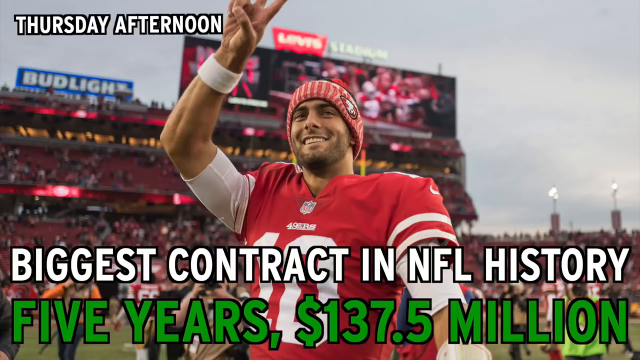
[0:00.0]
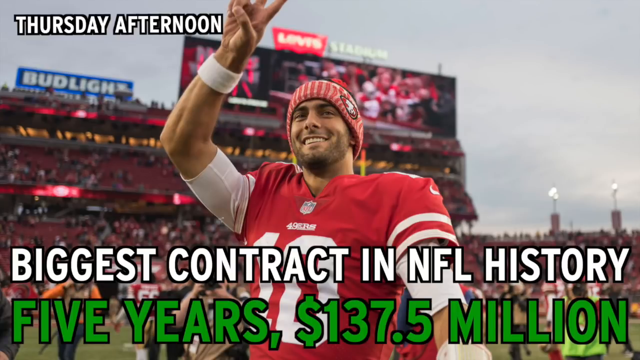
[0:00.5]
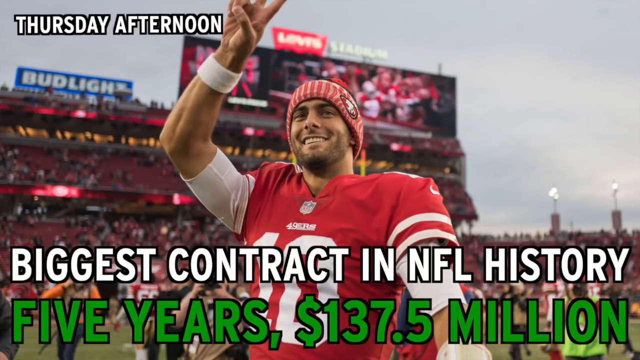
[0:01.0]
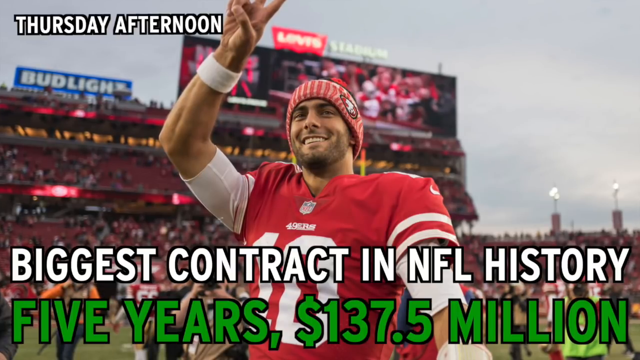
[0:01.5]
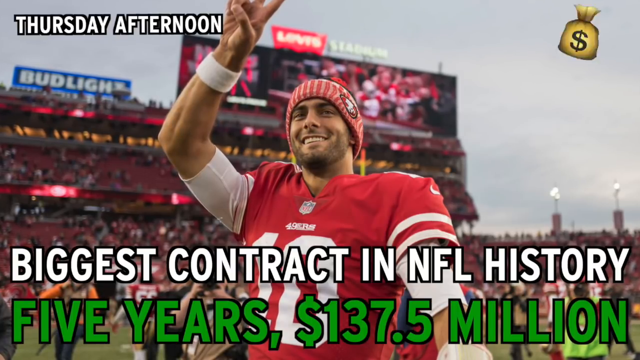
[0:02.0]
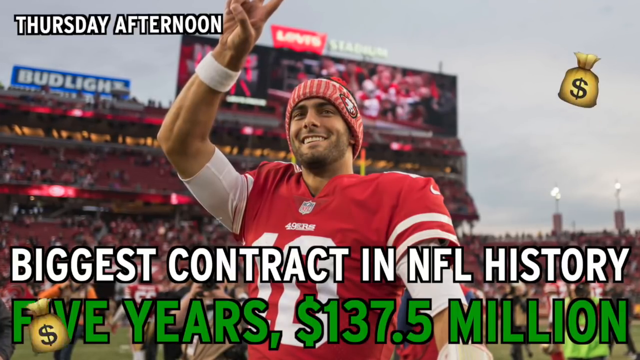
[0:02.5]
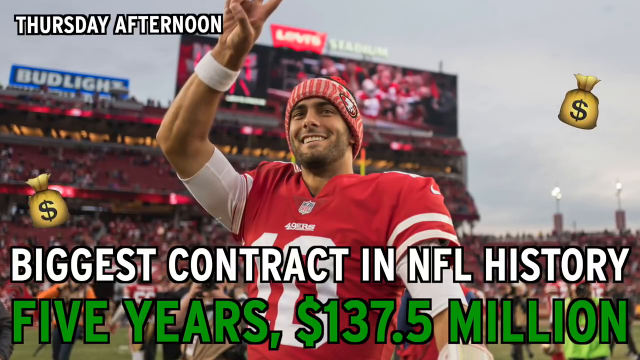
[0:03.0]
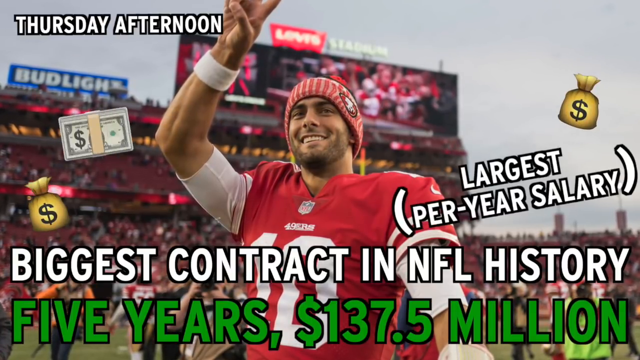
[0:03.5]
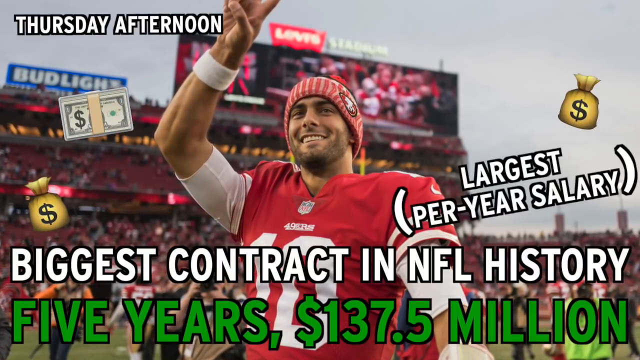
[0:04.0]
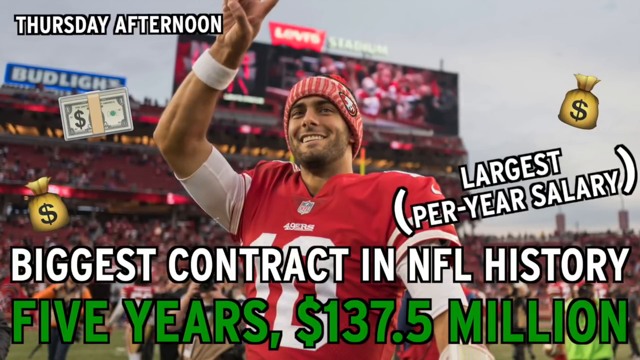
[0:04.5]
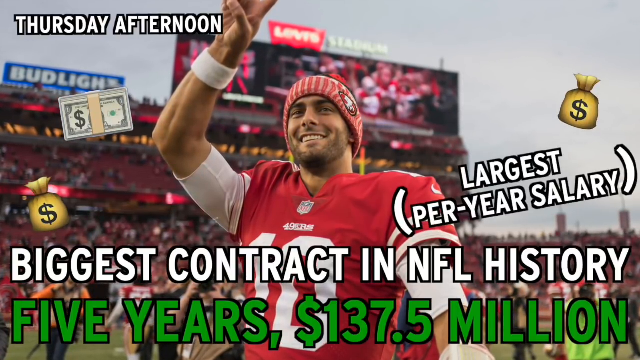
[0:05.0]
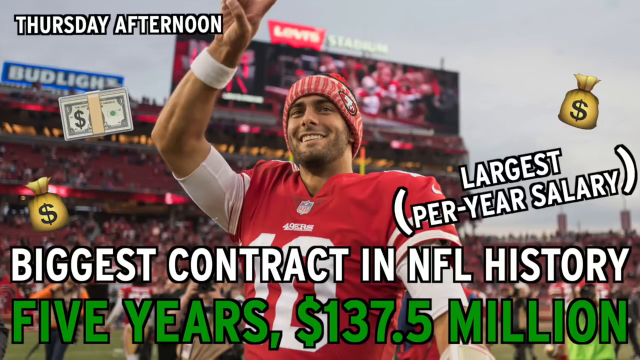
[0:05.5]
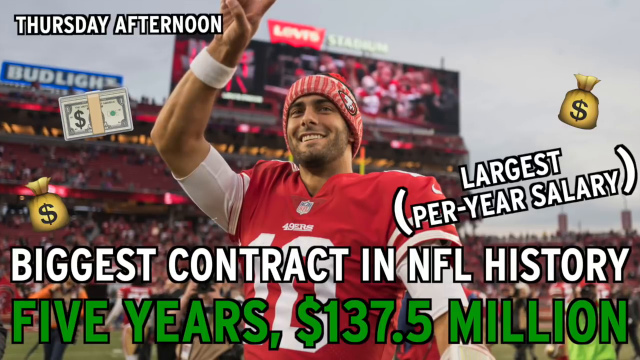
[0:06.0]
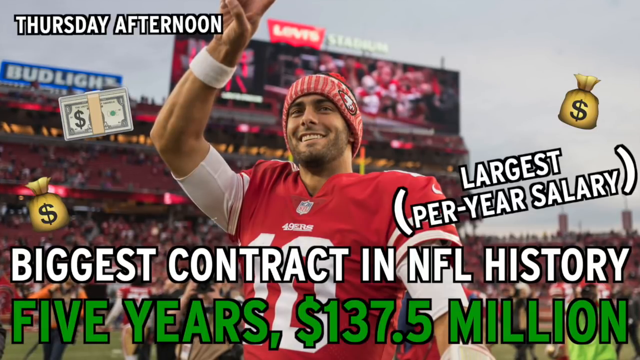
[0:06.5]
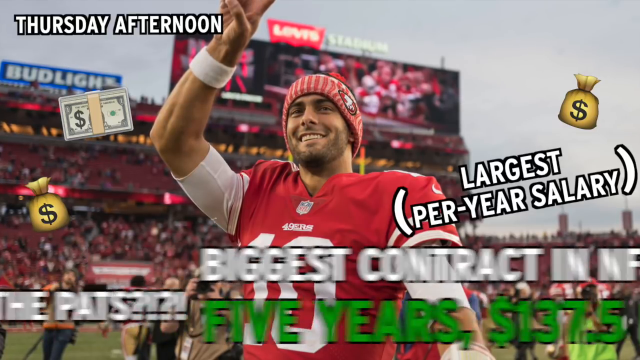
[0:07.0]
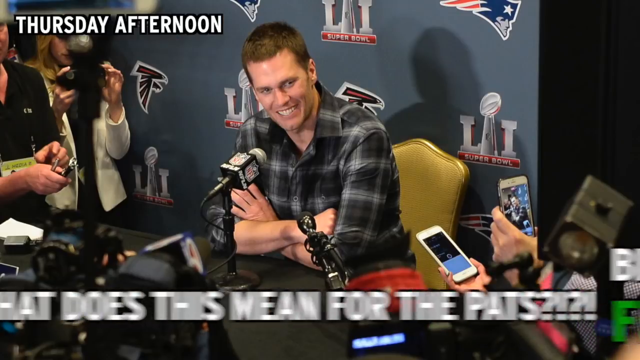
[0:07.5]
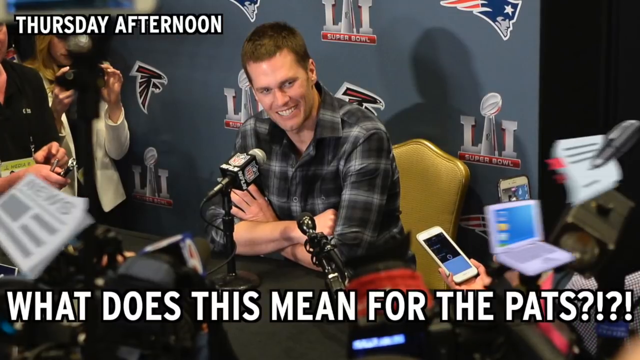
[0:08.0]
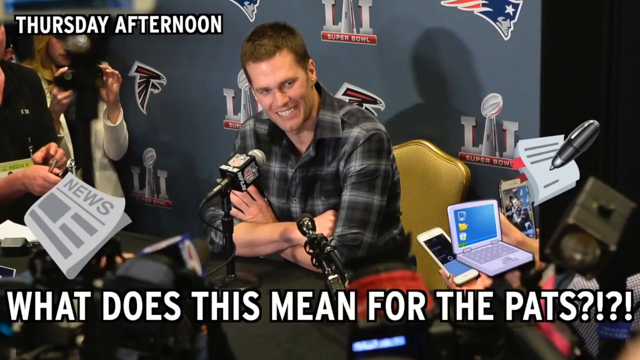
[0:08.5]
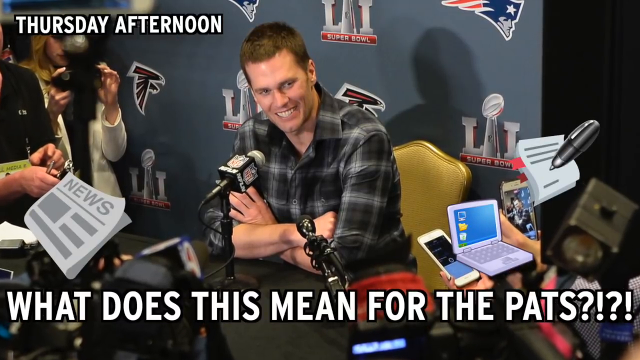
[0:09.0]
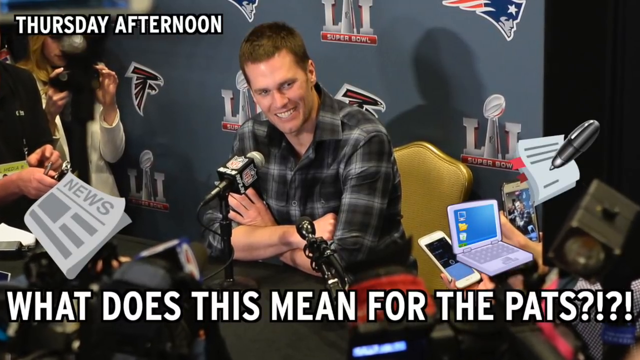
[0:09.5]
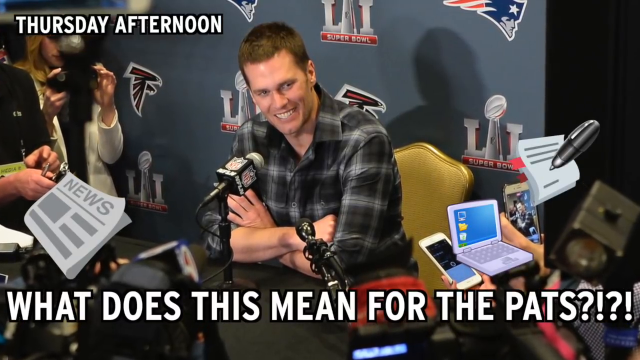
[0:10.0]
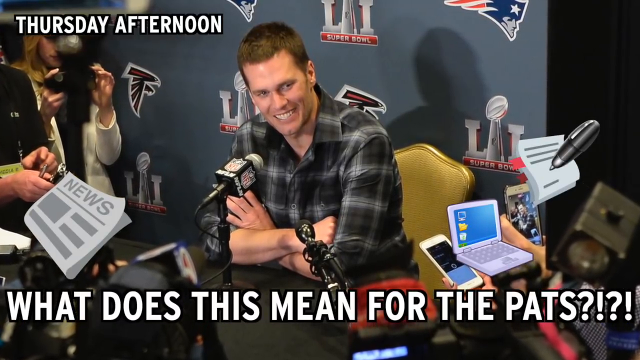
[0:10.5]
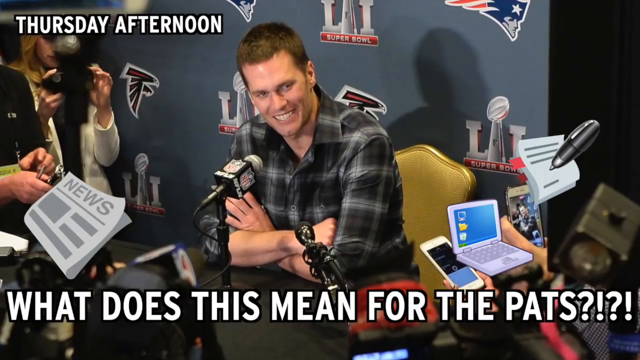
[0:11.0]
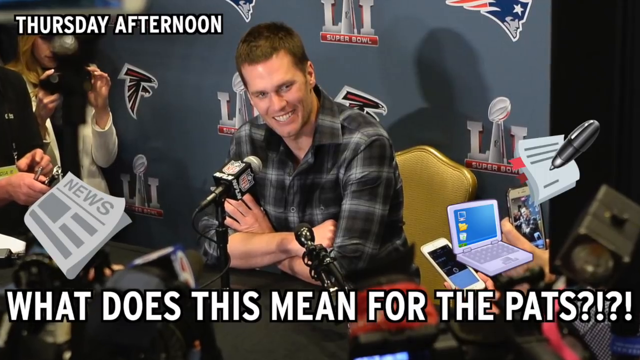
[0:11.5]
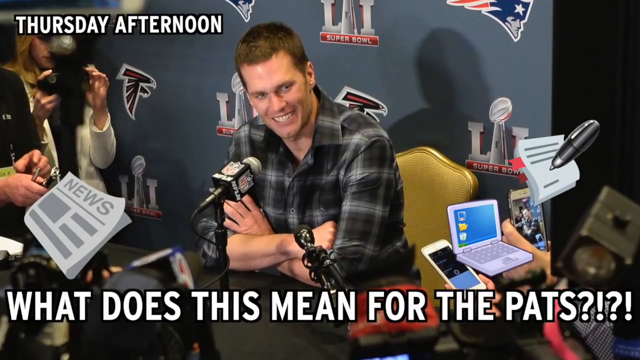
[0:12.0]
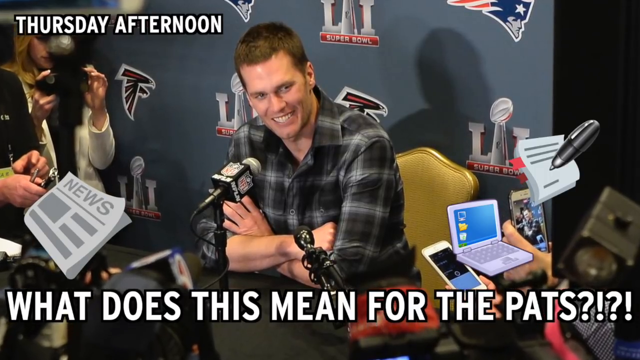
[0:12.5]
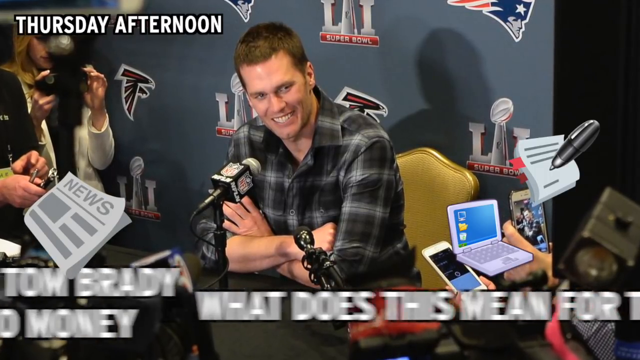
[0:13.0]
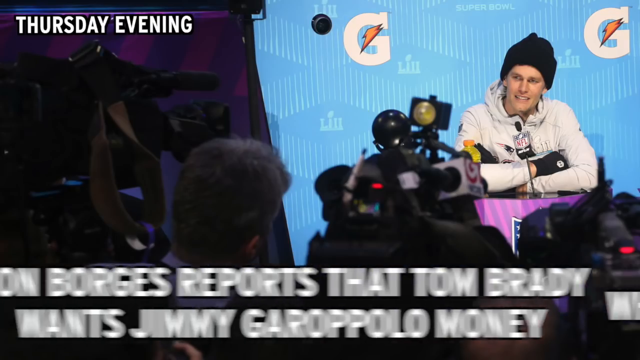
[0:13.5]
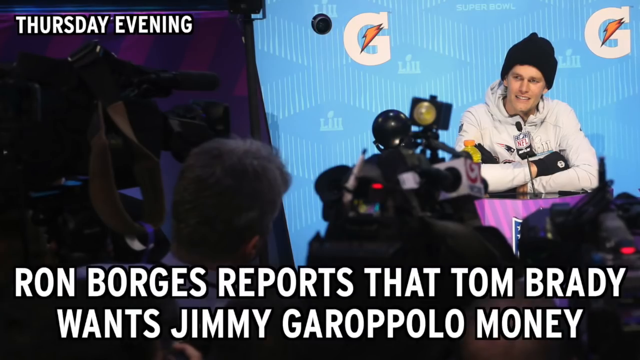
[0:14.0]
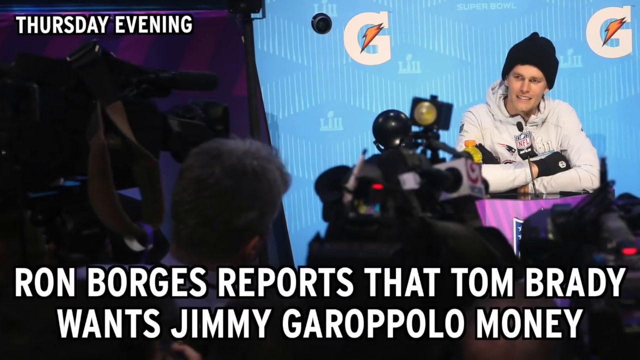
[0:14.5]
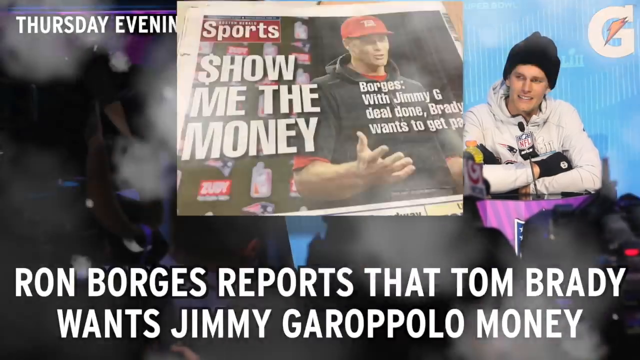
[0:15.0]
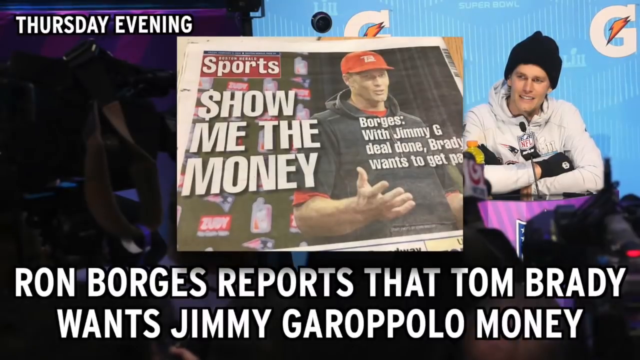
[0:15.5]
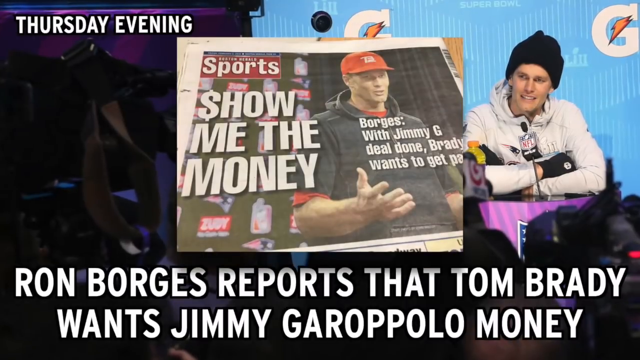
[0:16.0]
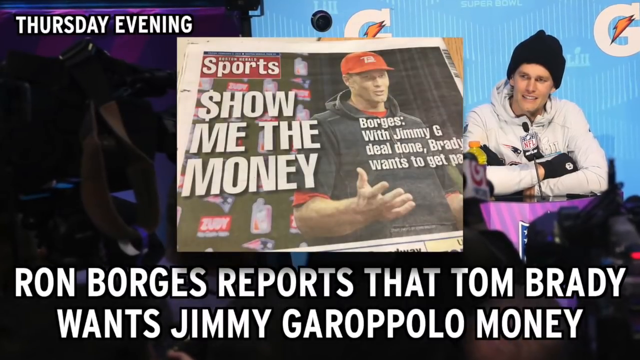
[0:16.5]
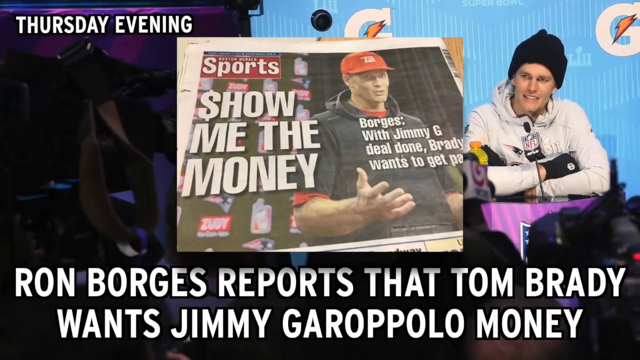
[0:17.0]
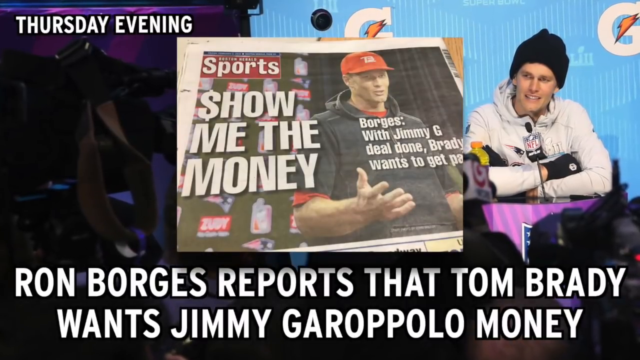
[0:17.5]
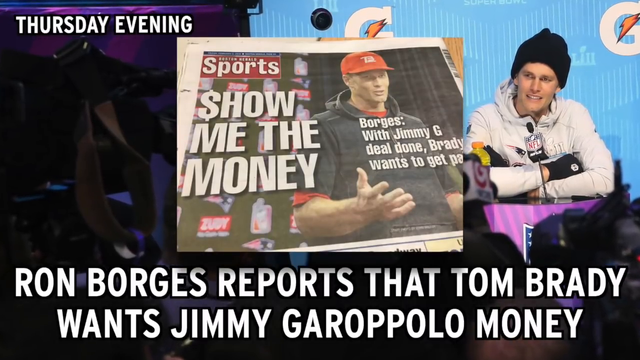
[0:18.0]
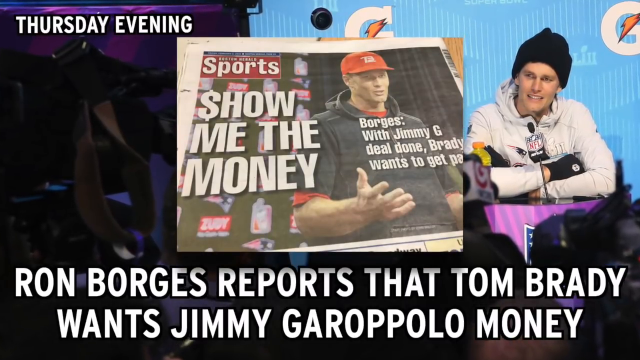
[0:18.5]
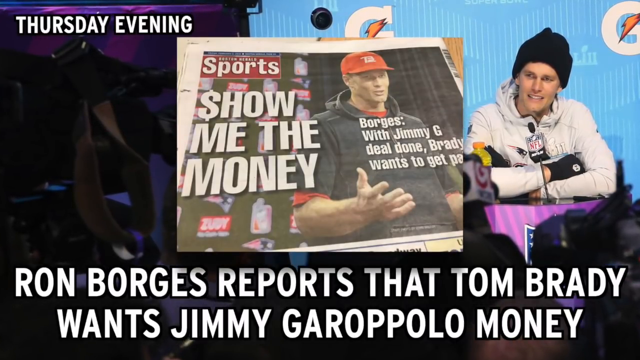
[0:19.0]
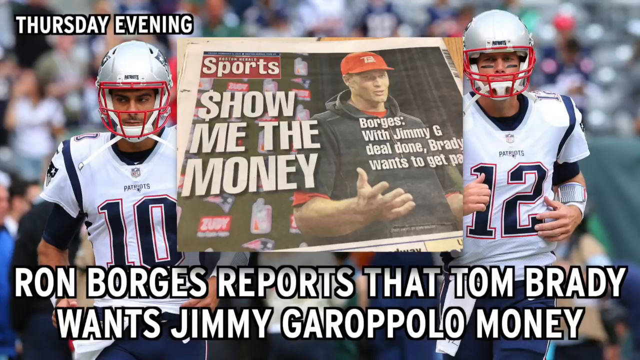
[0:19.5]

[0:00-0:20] A football player is in the center of the screen, a white male with stubble wearing a red and white jersey and a toque. Above him are the words "Thursday afternoon", and below him "Biggest contract in NFL history" appears in white, with "five years, $137.5 million" written in green beneath that. The camera zooms in, and money bags with dollar signs appear on screen and bounce. A stack of dollar bills also appears, and "largest per-year salary" is displayed in white in brackets. The camera zooms in, and the text exits the screen to the right. The scene transitions to a white male with short brown hair sitting at a desk, wearing a gray plaid long-sleeve button-up shirt, with a microphone branded with the NFL logo in front of him. Reporters surround him, holding up microphones and smartphones. More icons appear on screen, such as a newspaper, a laptop, and a pen and papers. The text at the bottom now reads "What does this mean for the rats?!?!?" The camera zooms in. The scene transitions to a white male in a white coat and a black beanie on the right-hand side, with a Gatorade background behind him and a film crew in front filming him. The text at the bottom now reads "Ron Borges reports that Tom Brady wants Jimmy Garoppolo money". An animation drops from the top of the screen, showing a newspaper with the headline "Show me the money". The camera zooms in. The screen transitions to two men wearing jerseys with the numbers 10 and 12, jogging towards the camera.